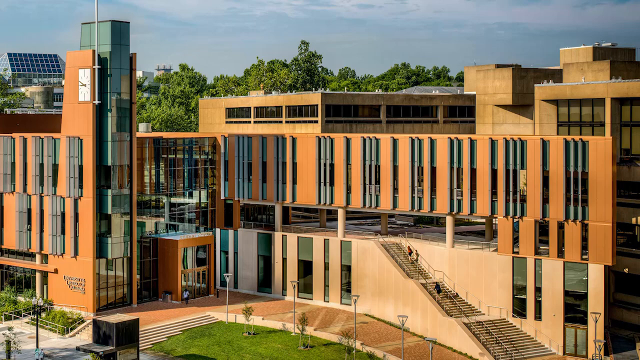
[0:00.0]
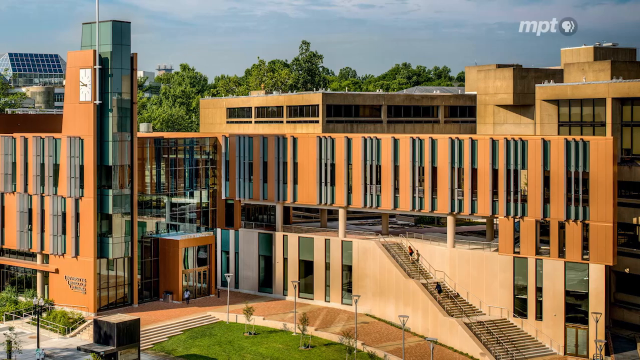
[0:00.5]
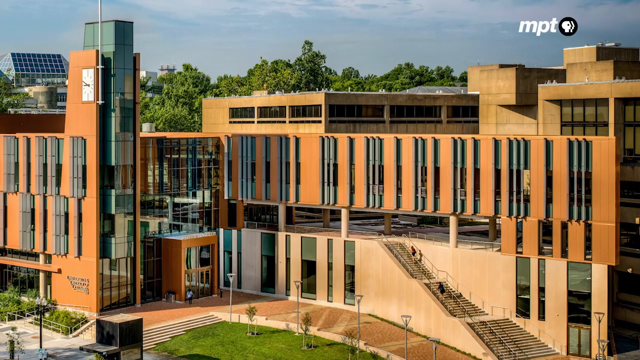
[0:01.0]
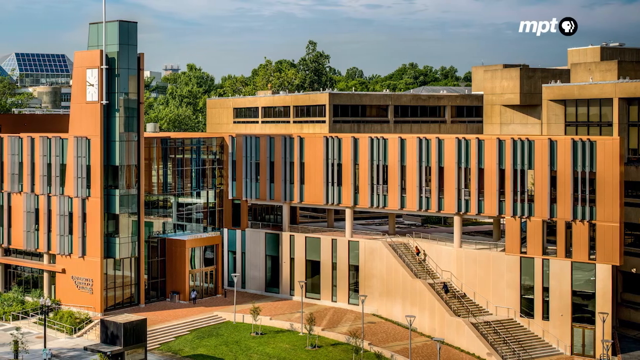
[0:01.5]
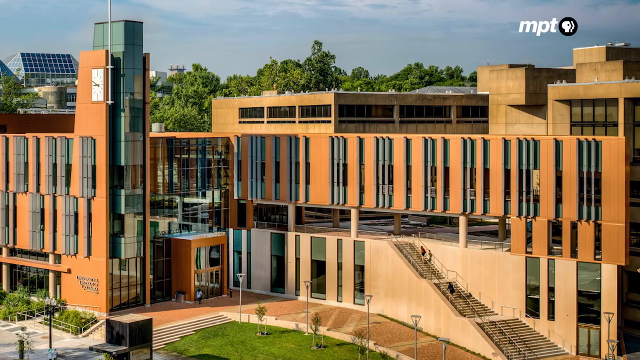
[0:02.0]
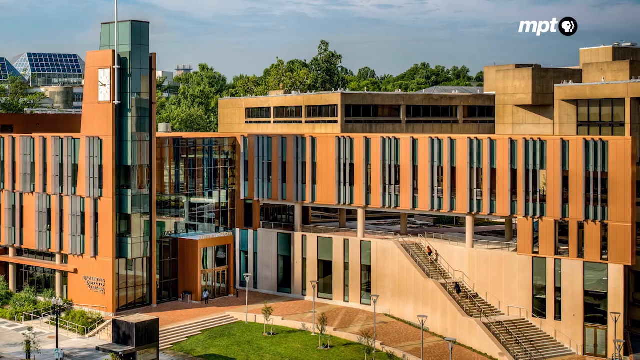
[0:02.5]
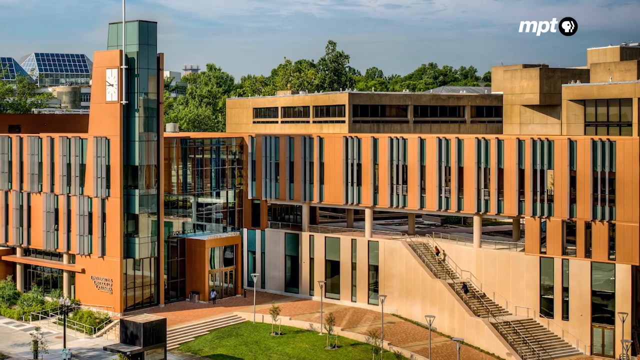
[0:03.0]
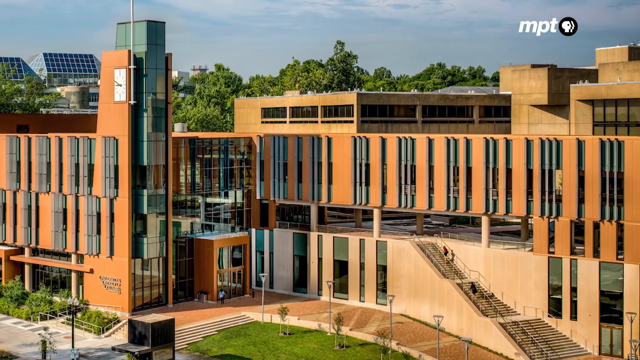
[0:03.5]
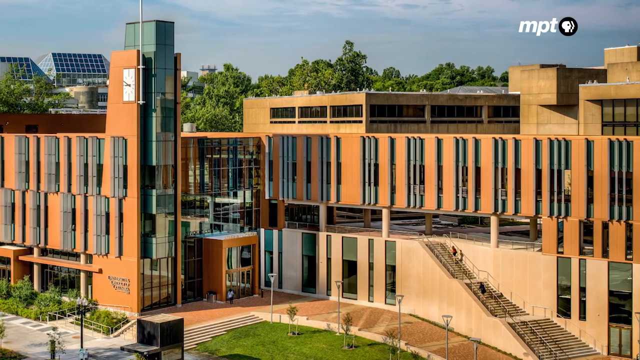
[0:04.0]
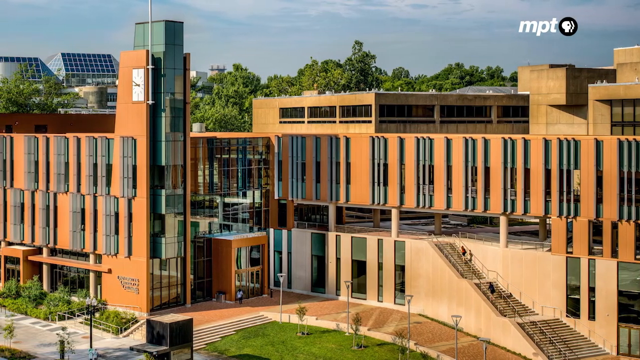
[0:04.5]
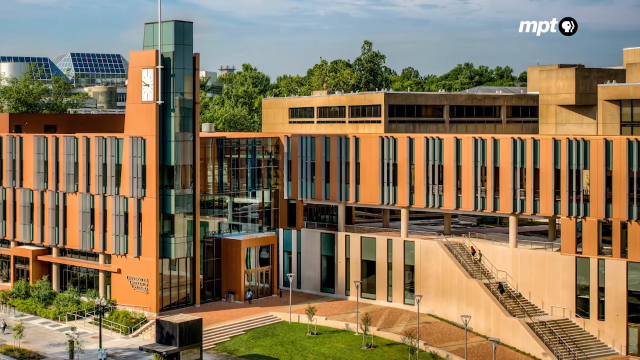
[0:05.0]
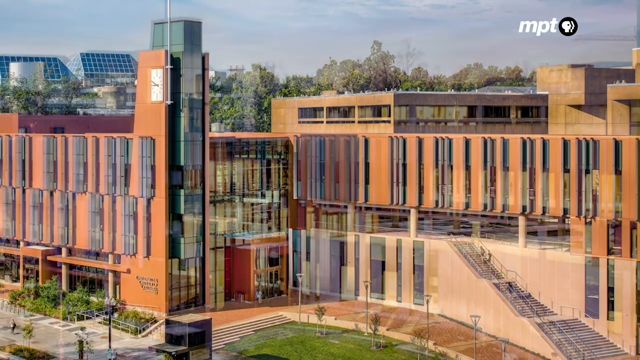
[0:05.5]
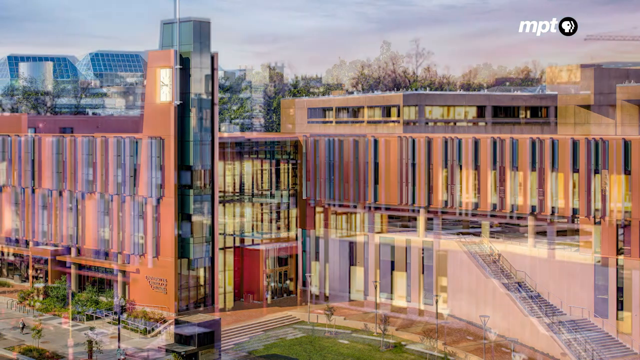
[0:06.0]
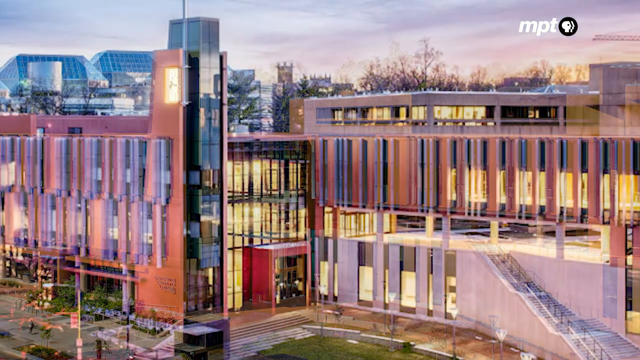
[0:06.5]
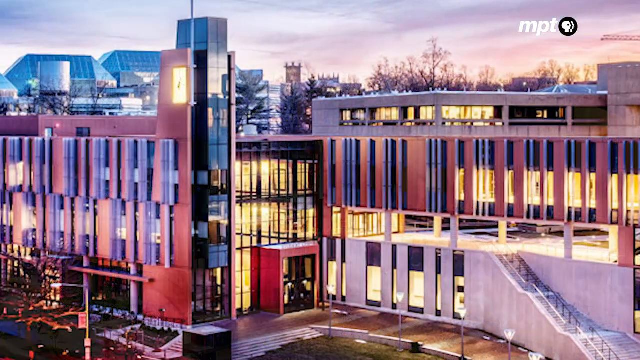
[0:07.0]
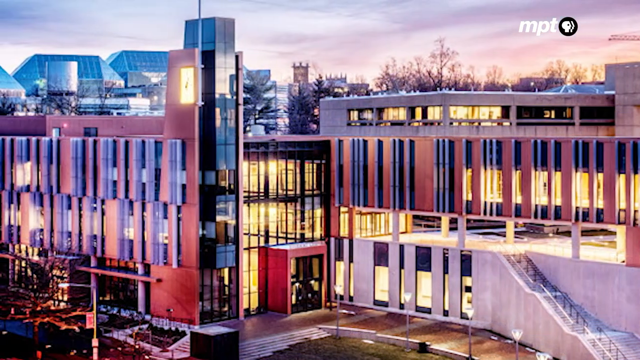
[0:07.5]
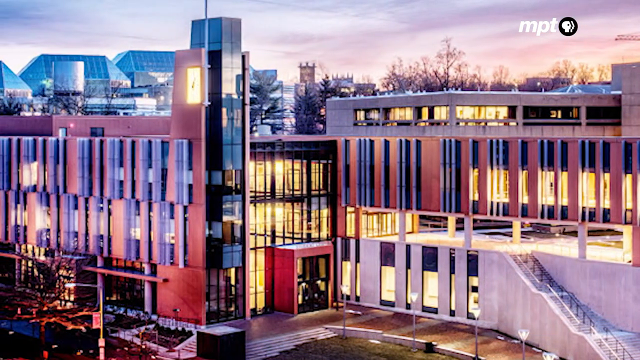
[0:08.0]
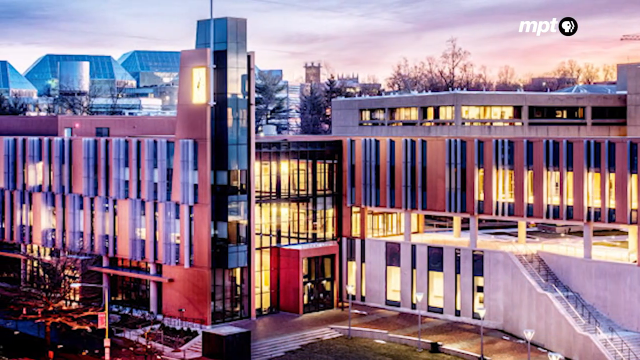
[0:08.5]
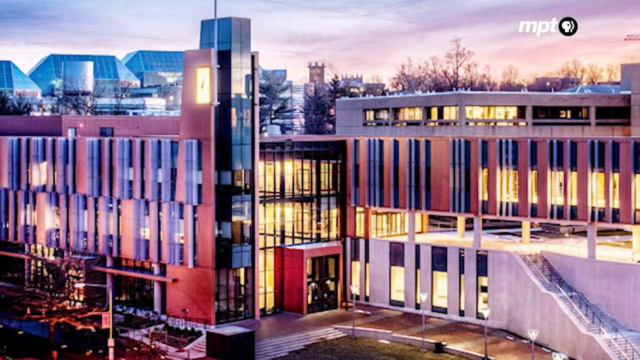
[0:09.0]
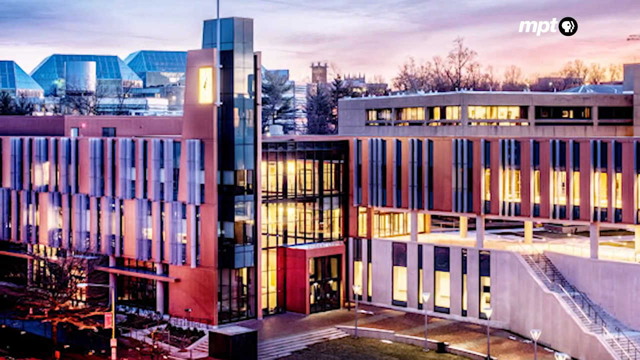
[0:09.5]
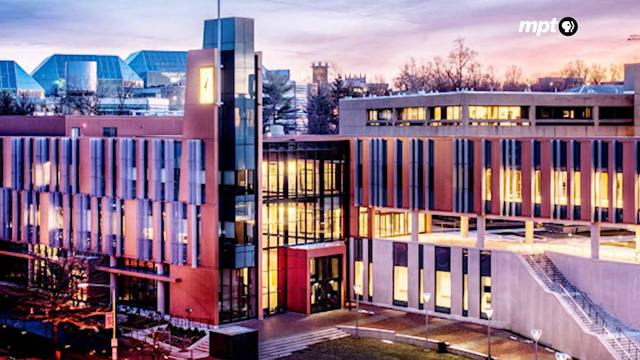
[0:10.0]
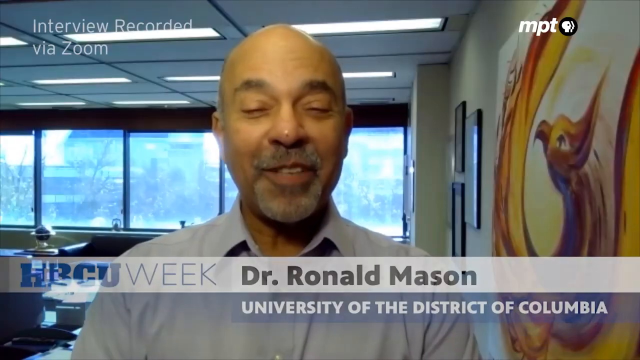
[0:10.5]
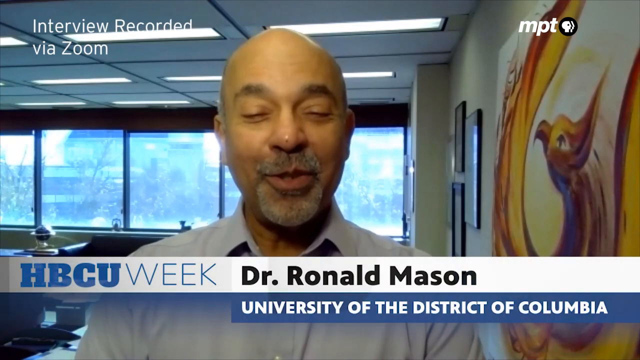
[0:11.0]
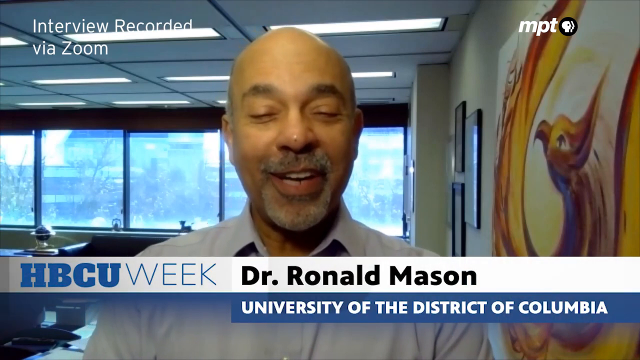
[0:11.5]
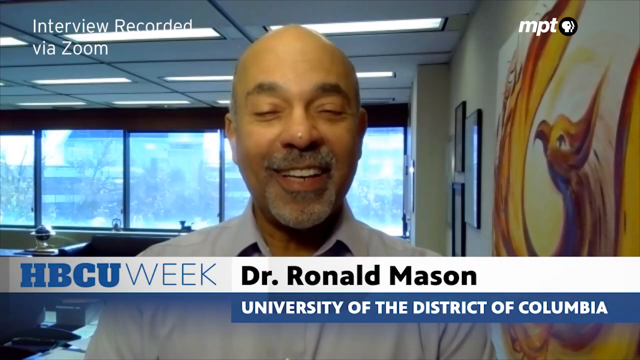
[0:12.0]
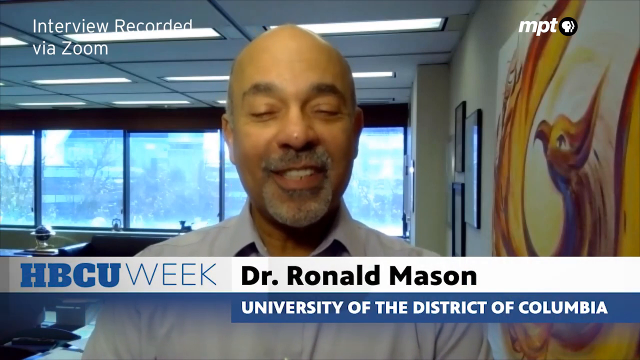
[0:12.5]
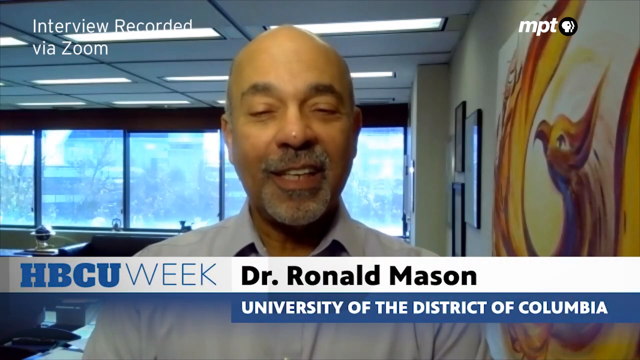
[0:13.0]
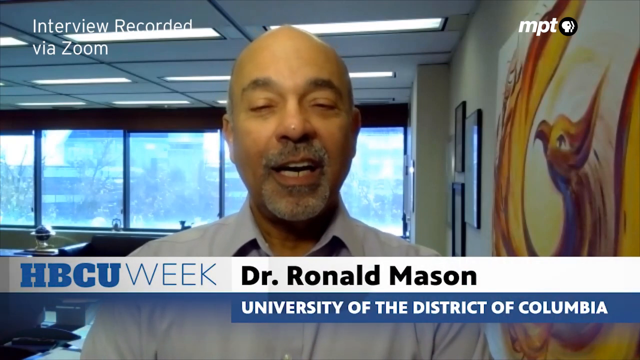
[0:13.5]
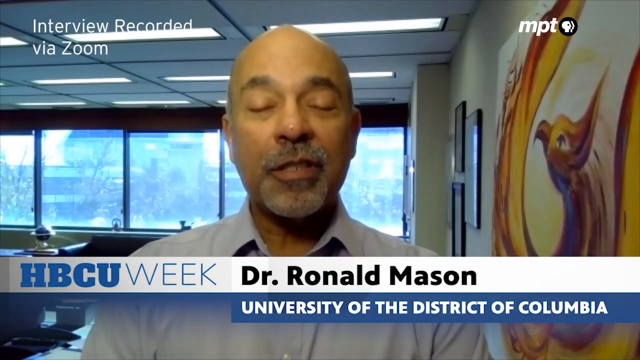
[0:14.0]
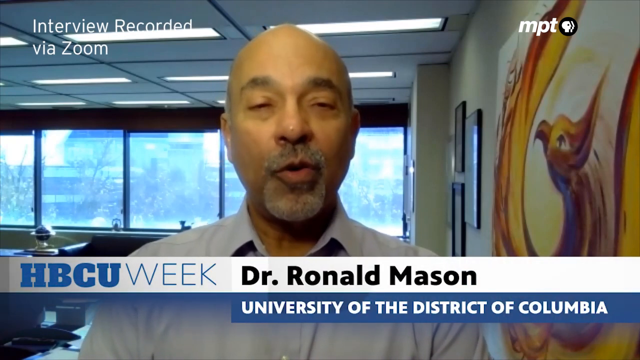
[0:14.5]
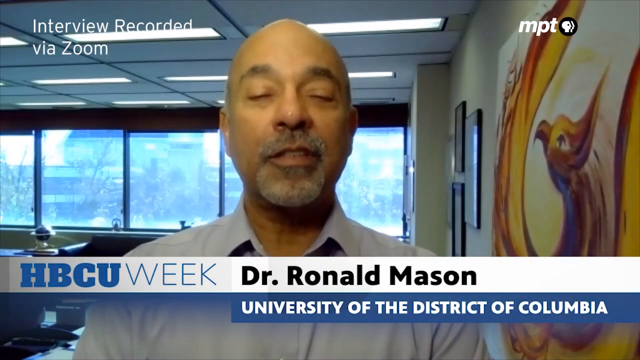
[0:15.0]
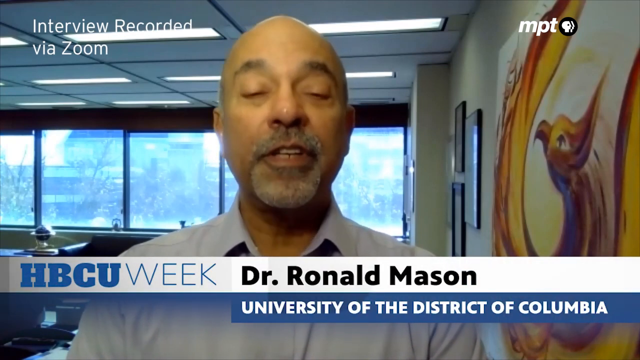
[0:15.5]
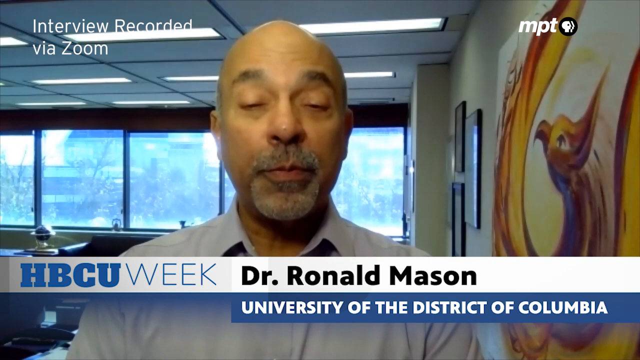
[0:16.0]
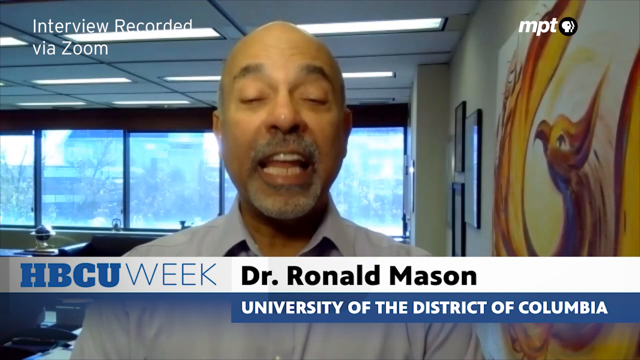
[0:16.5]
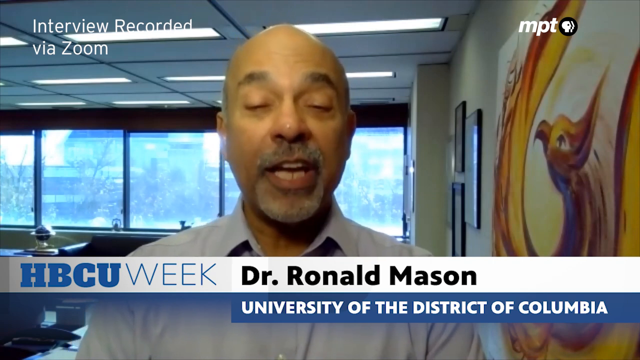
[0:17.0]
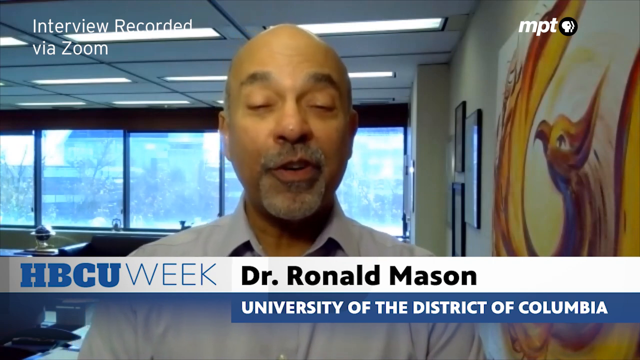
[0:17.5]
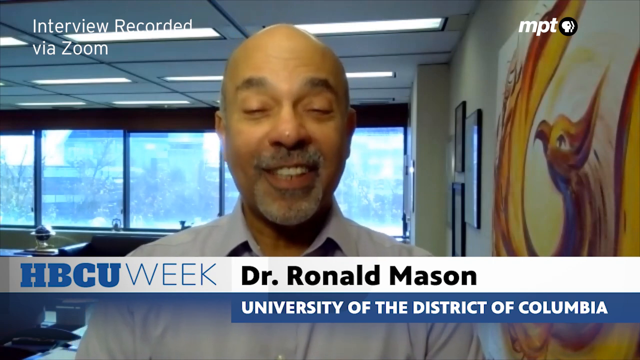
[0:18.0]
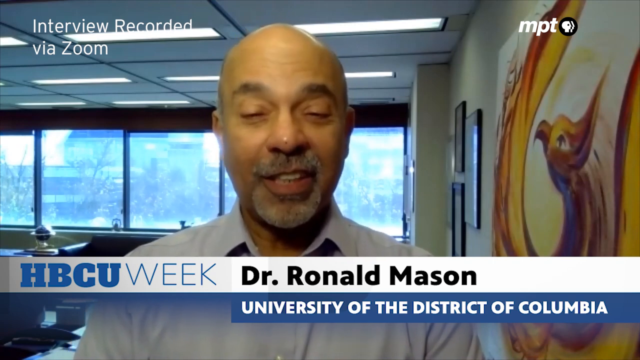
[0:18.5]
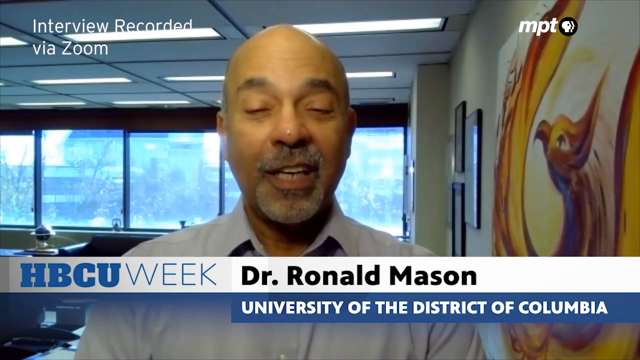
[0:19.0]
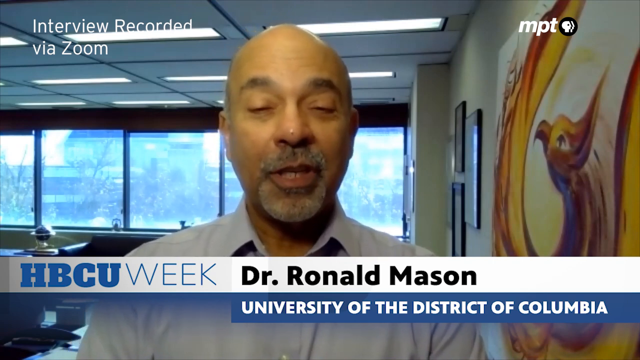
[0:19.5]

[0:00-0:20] The video opens on what turns out to be an institution, with the camera moving. The background changes and something glassy comes into view. Text at the top reads "interview recorded via zoom" as a bald man appears, with the caption "HBCU week". The man is Dr. Ronald Mason, from the University of the District of Columbia, which explains why the earlier footage showed a campus. Behind him are windows and a yellowish and white painting. As he talks, he smiles, nods his head and moves his hand.